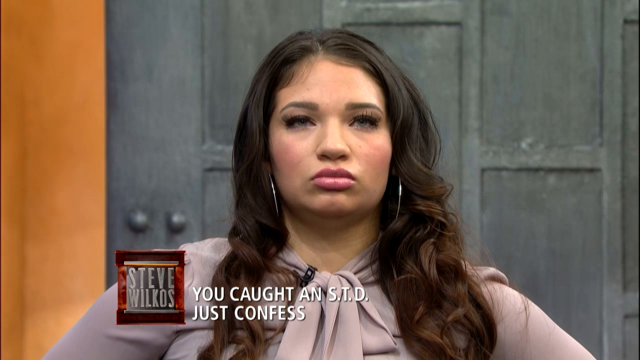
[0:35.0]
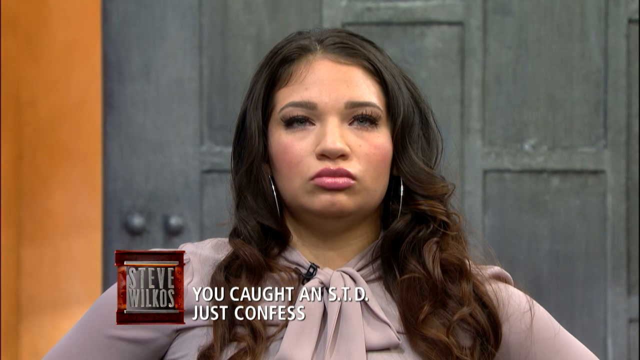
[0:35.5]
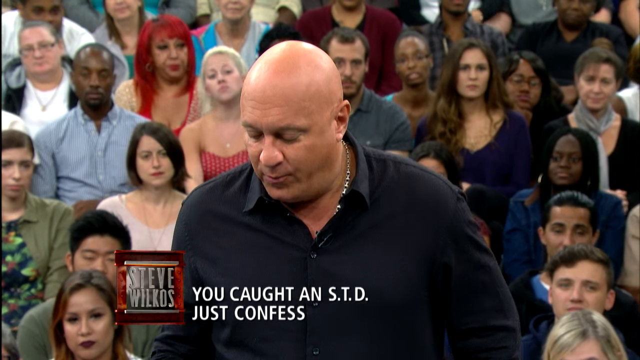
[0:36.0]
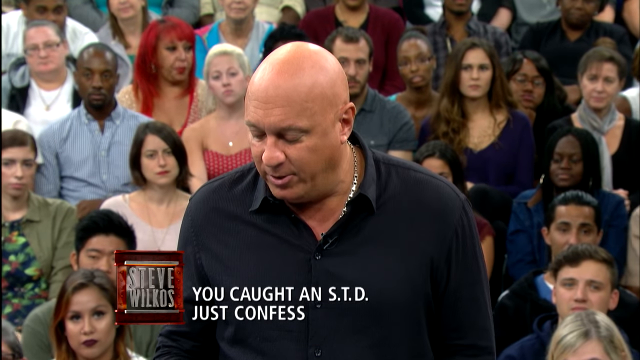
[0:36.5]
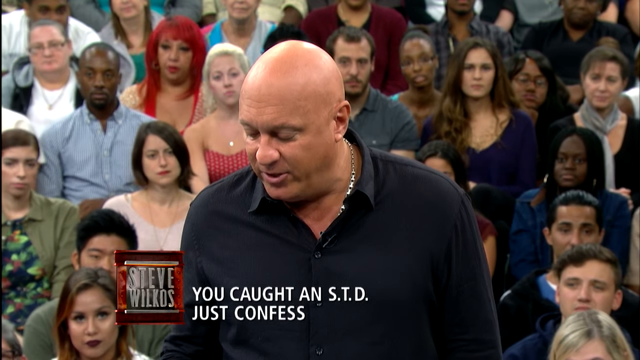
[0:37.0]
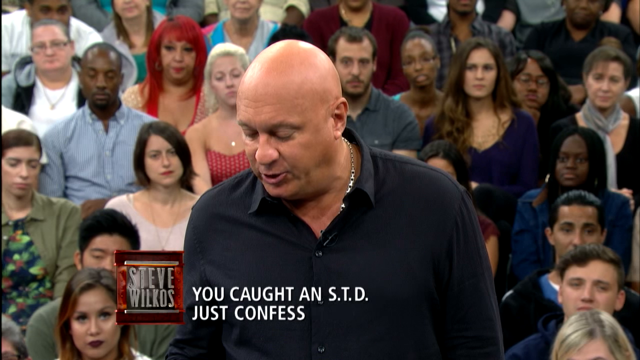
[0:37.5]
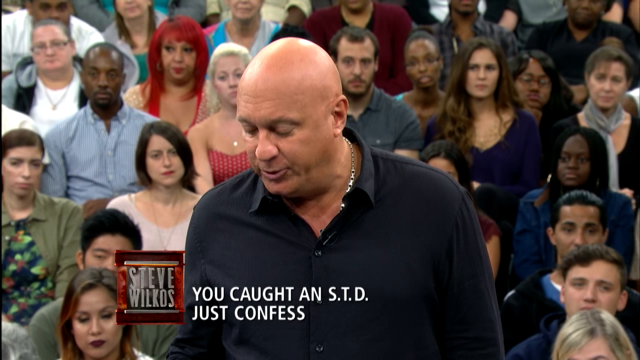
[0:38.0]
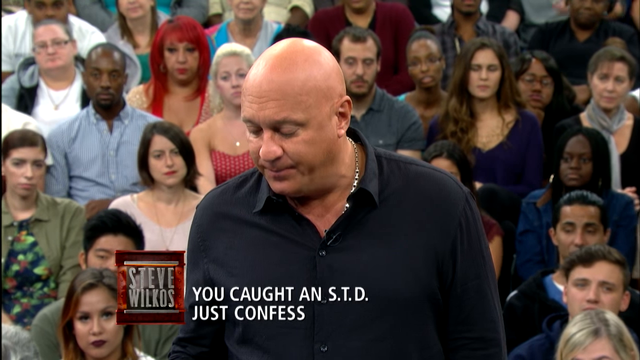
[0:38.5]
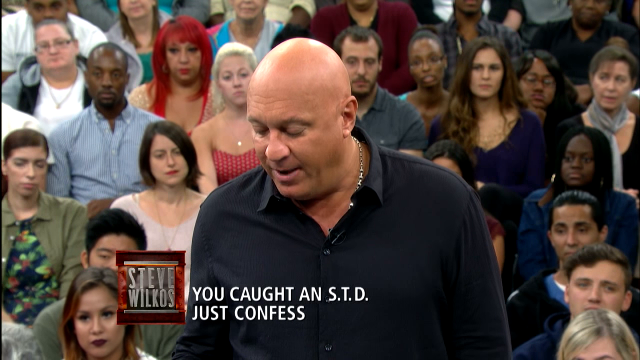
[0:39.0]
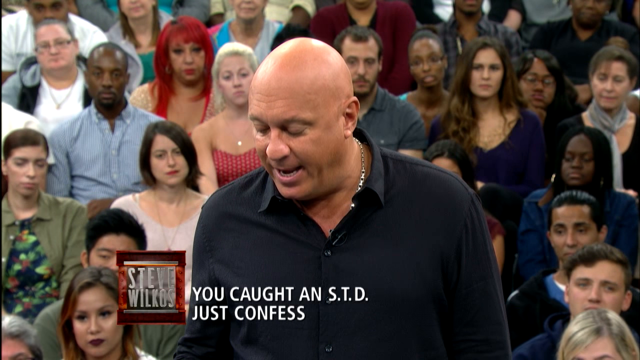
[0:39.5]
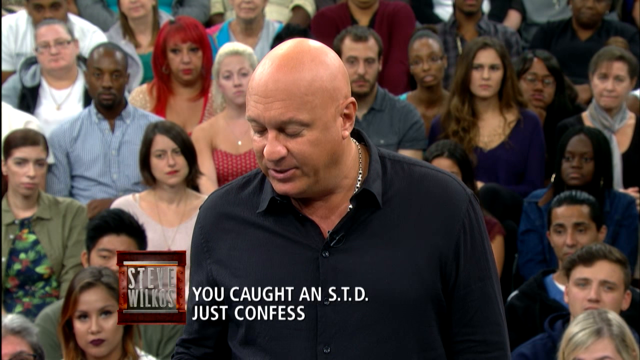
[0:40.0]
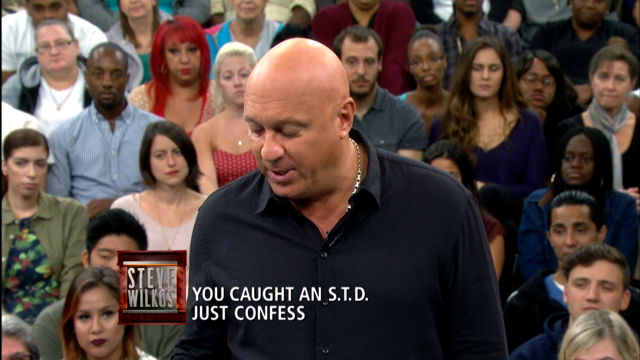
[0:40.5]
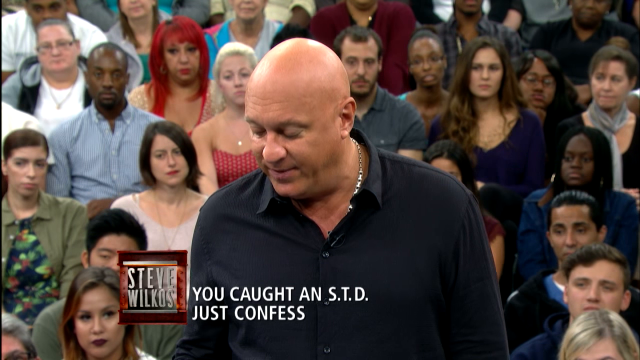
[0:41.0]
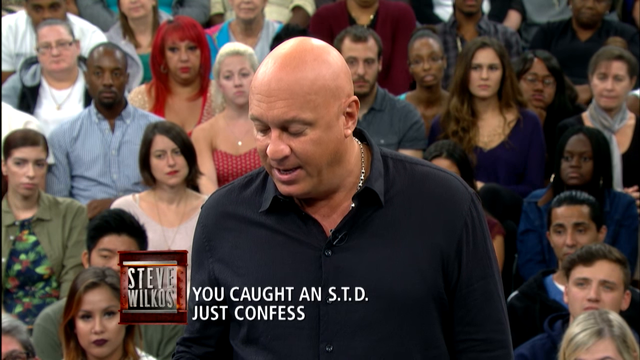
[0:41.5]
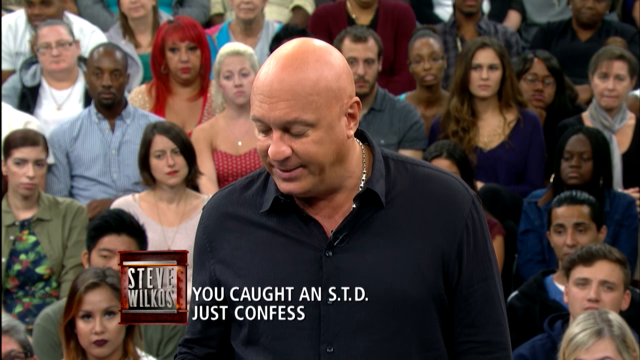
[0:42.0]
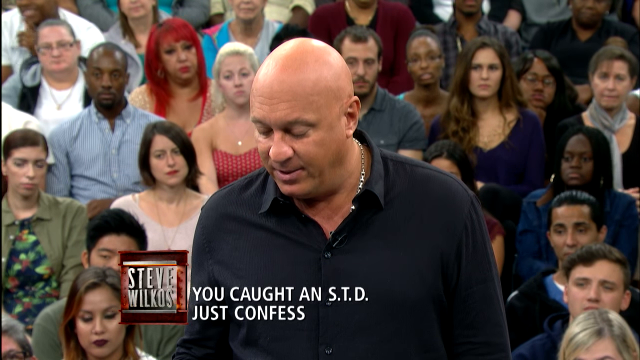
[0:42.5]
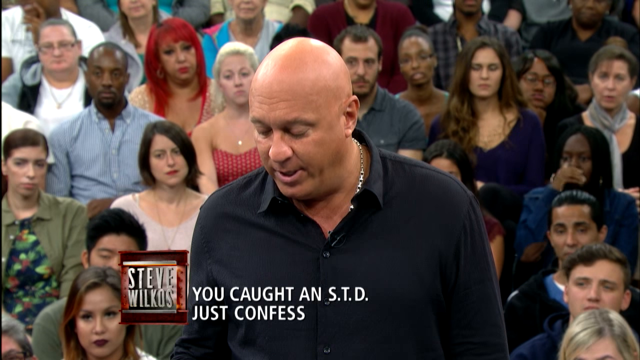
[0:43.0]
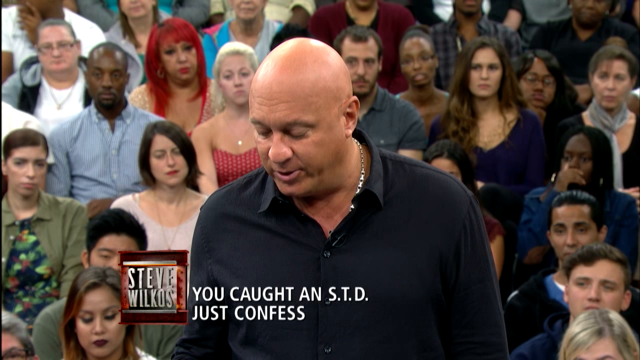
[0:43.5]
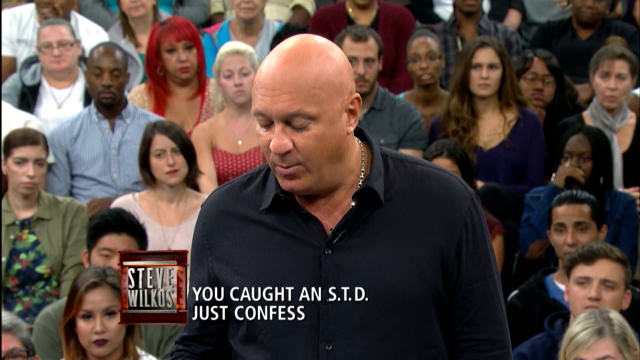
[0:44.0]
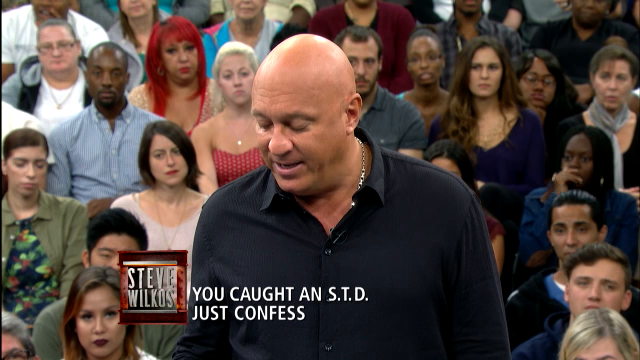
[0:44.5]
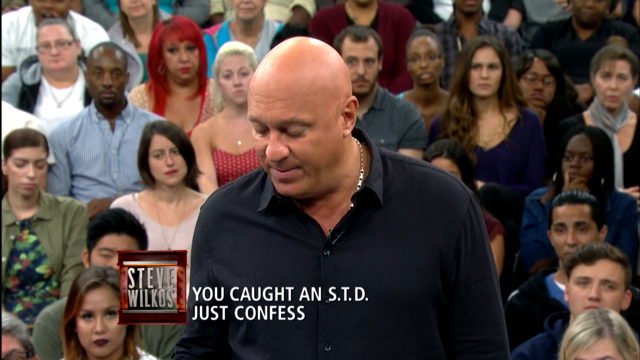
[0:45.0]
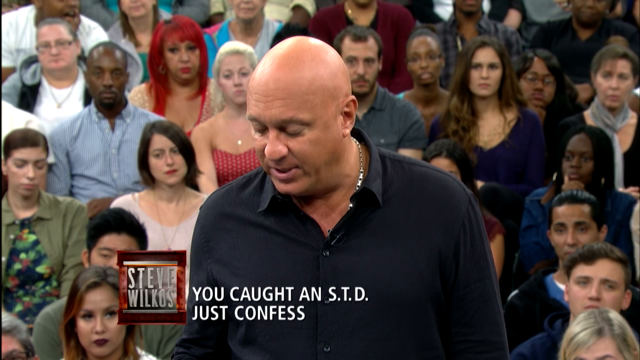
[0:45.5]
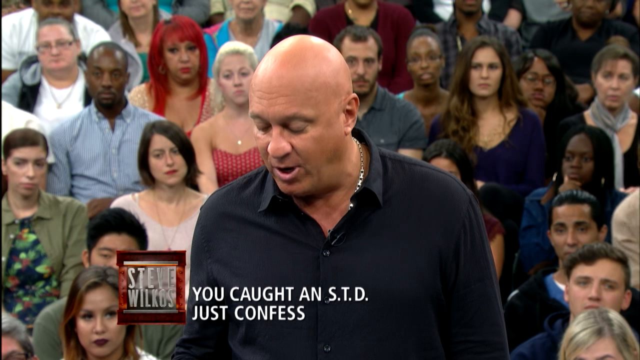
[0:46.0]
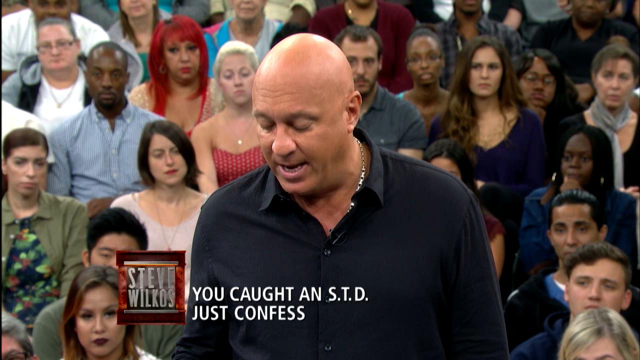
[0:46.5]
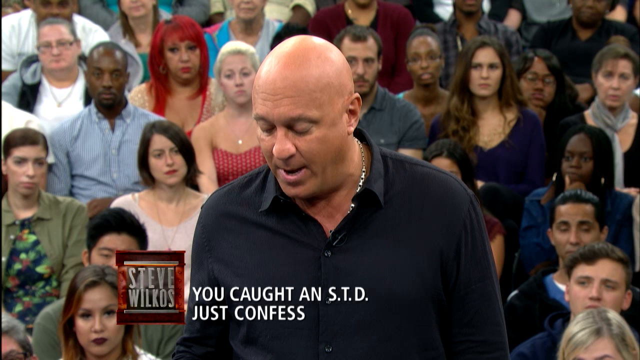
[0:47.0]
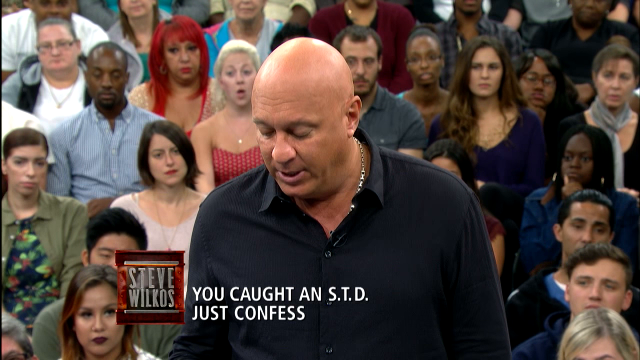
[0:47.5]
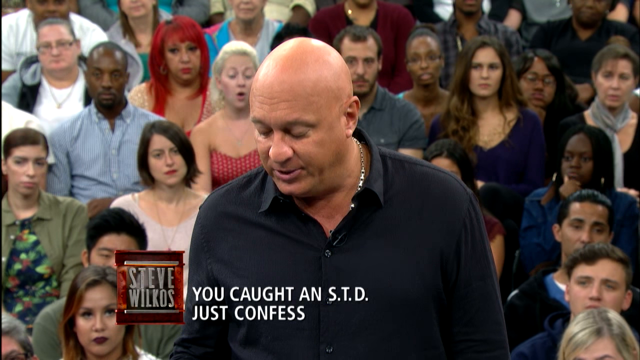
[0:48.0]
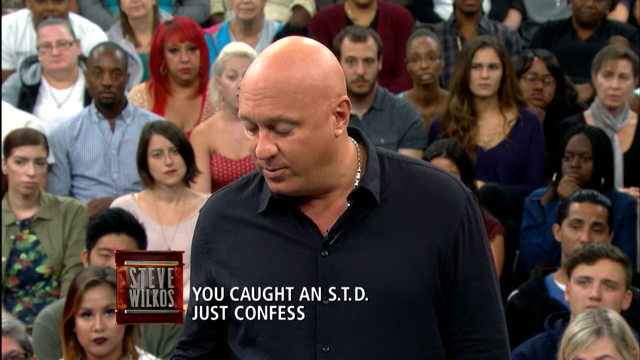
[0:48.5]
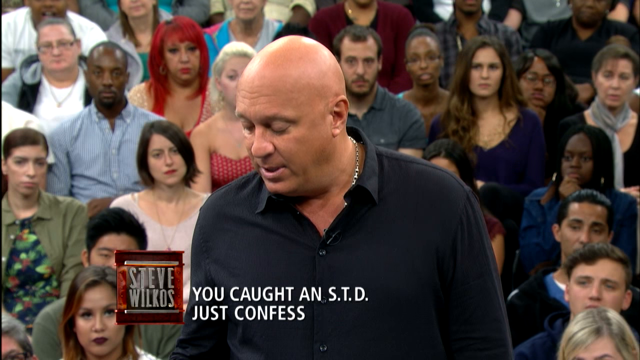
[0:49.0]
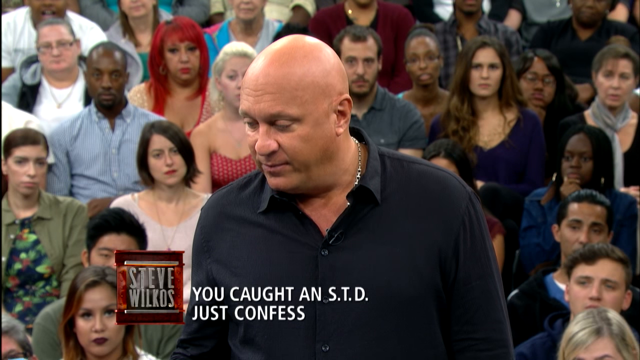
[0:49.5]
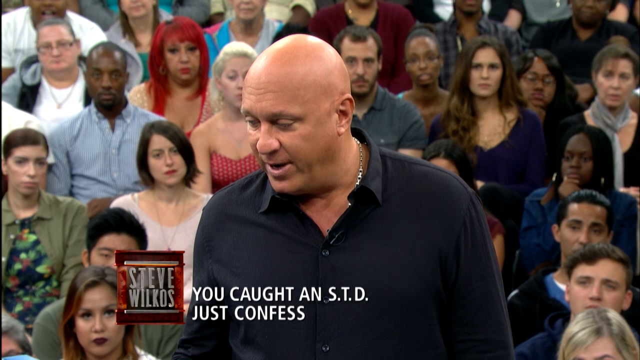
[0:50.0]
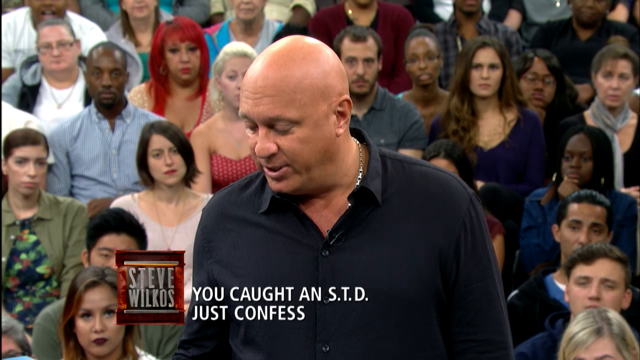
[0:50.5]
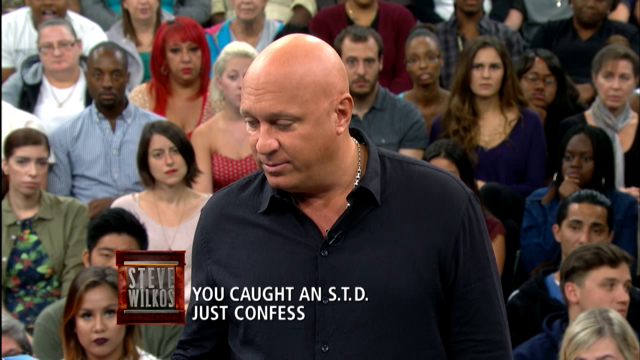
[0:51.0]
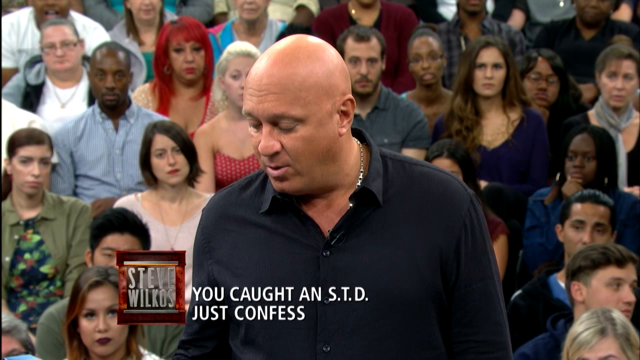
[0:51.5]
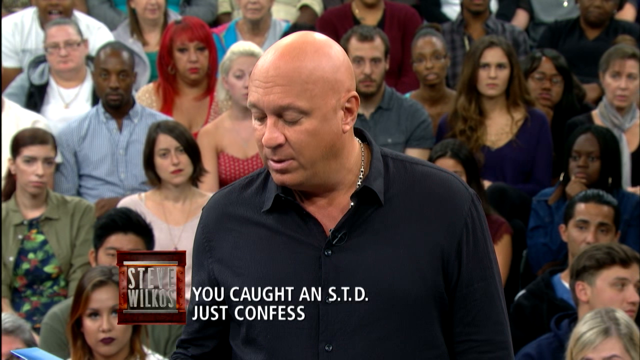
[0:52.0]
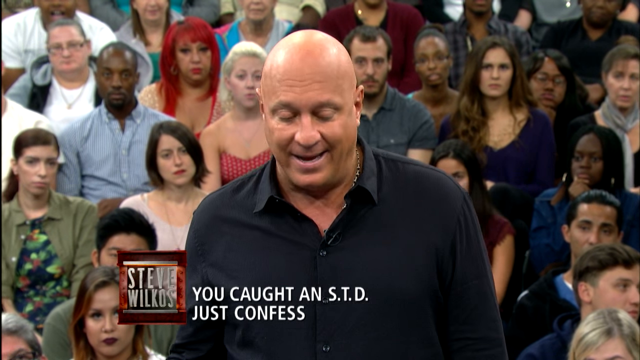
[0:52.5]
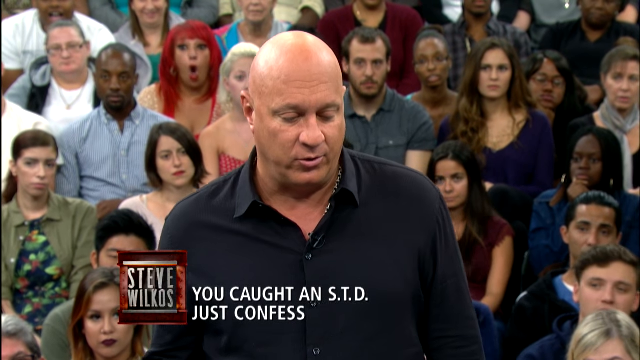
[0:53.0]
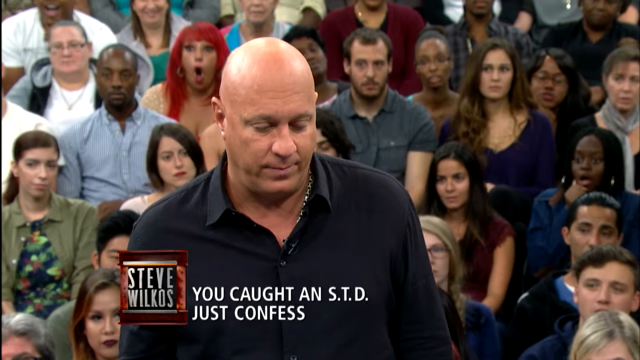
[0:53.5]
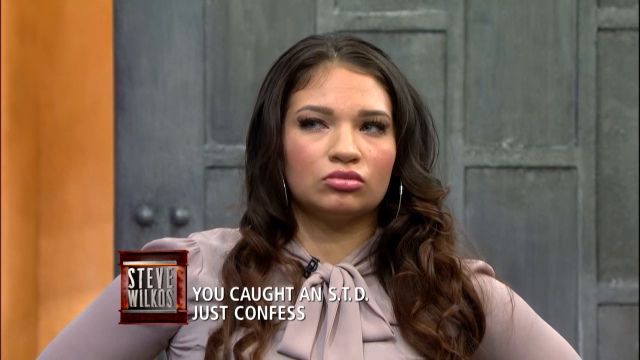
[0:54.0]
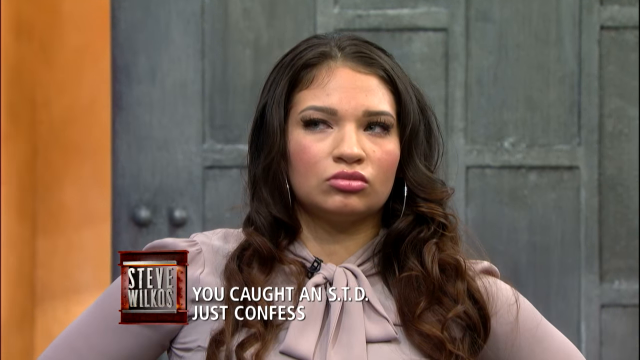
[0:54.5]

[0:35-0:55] The video briefly returns to the young woman, who is still not talking, then switches to the TV host, who speaks for quite a while without looking up once. A silver necklace is visible under his collar from this view. In the audience behind him, a woman to his left with bright red hair shakes her head in response to what he says. The video then cuts to the young woman, who is looking just to the side with a very serious and upset expression. While talking, the host turns from facing toward the left to facing a bit toward the right, but his eyes barely flicker up from what he is reading.